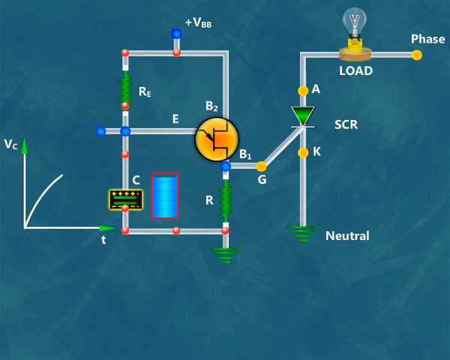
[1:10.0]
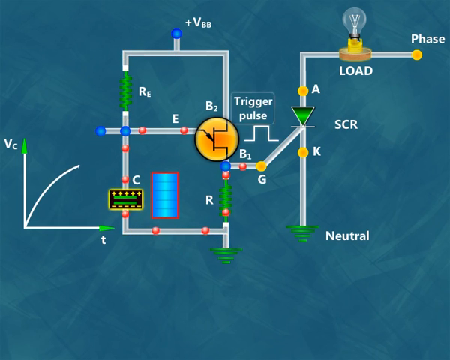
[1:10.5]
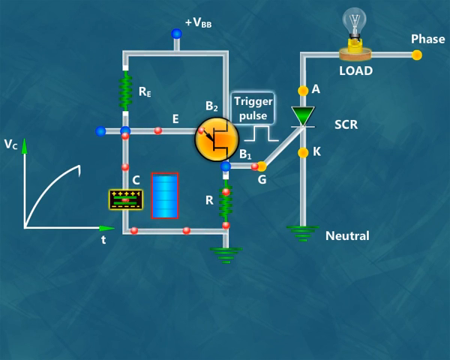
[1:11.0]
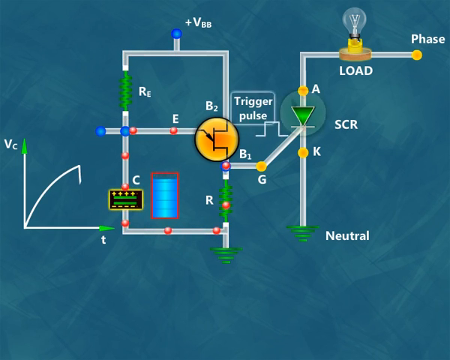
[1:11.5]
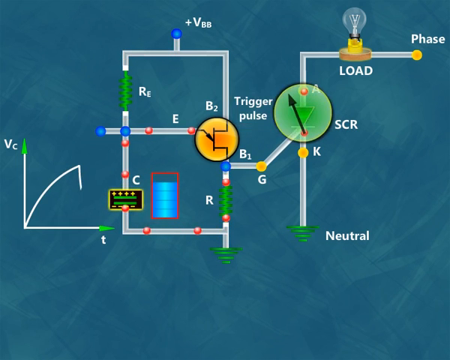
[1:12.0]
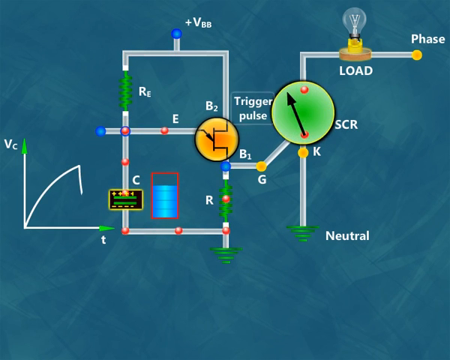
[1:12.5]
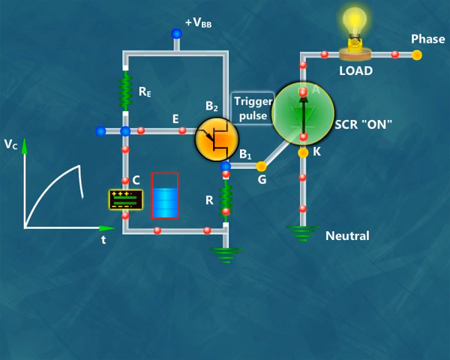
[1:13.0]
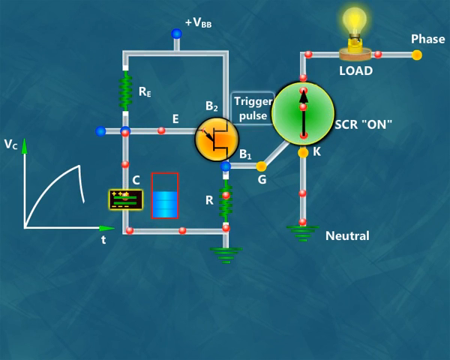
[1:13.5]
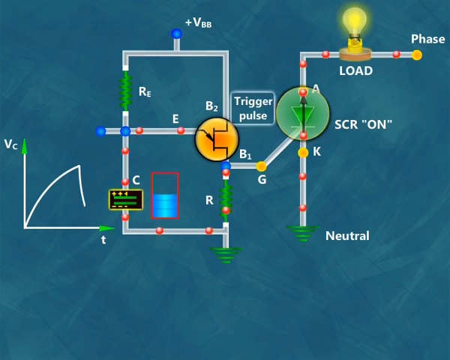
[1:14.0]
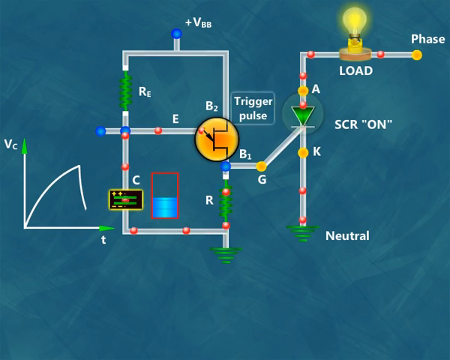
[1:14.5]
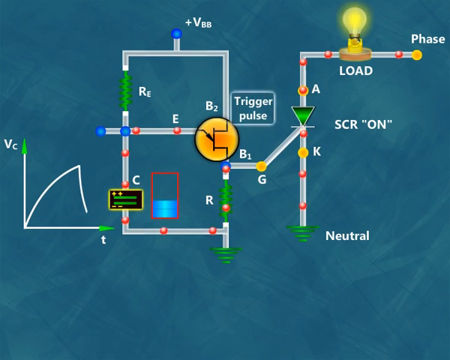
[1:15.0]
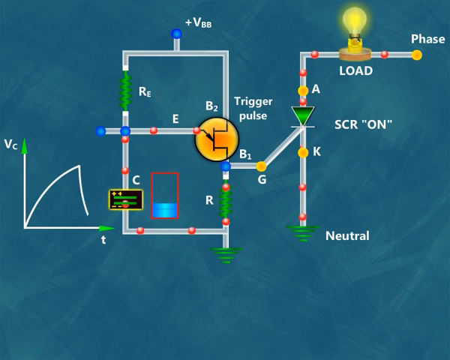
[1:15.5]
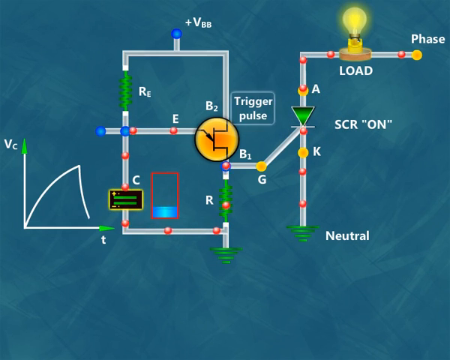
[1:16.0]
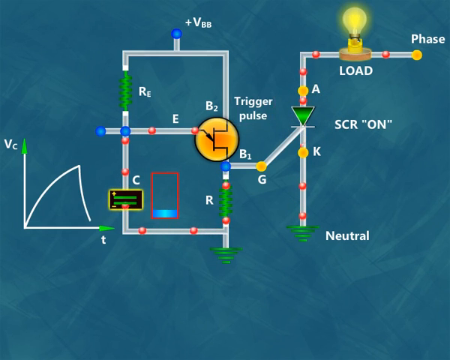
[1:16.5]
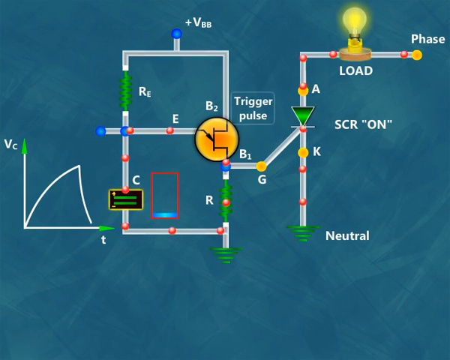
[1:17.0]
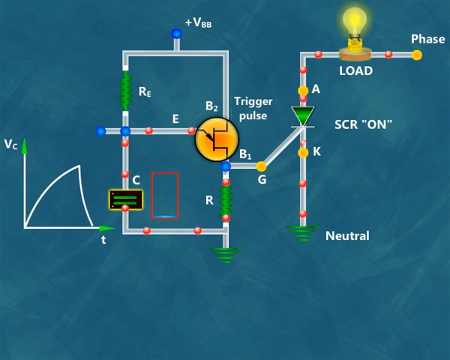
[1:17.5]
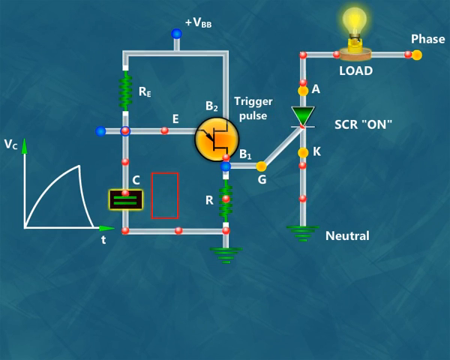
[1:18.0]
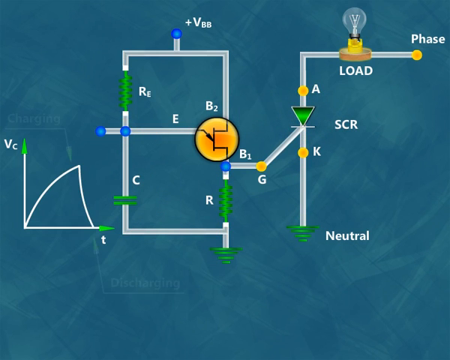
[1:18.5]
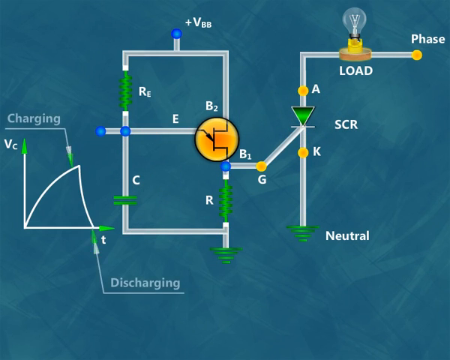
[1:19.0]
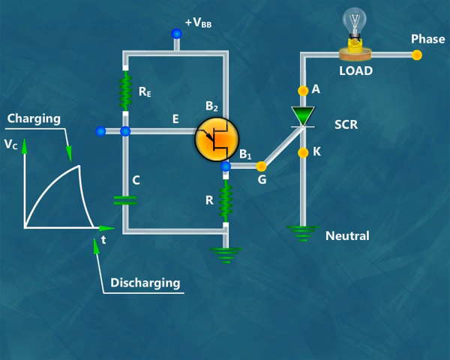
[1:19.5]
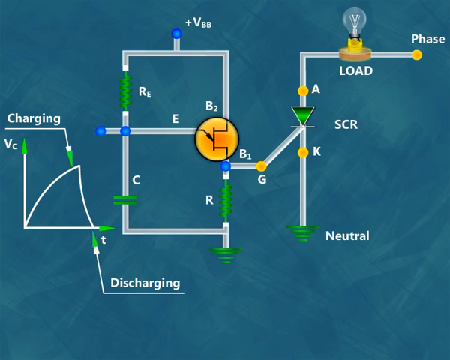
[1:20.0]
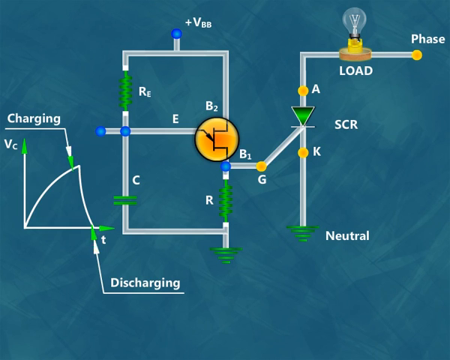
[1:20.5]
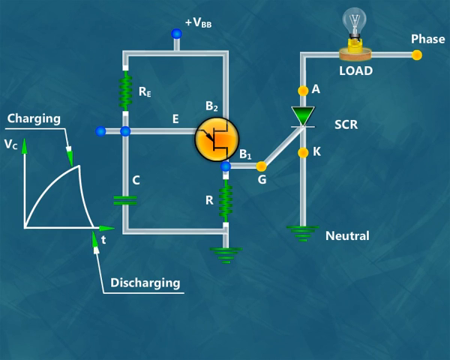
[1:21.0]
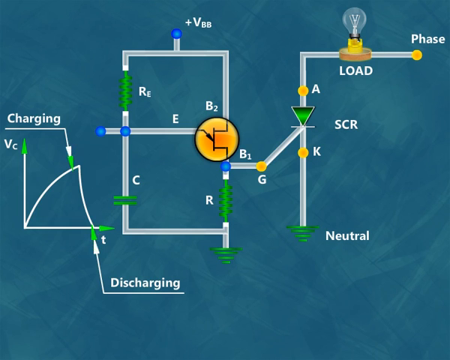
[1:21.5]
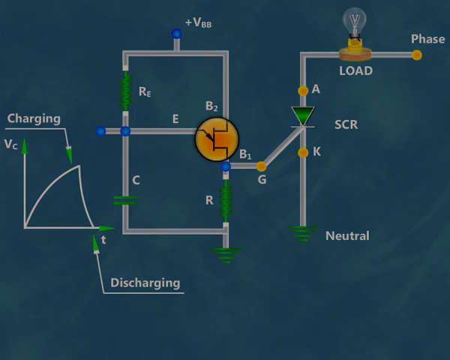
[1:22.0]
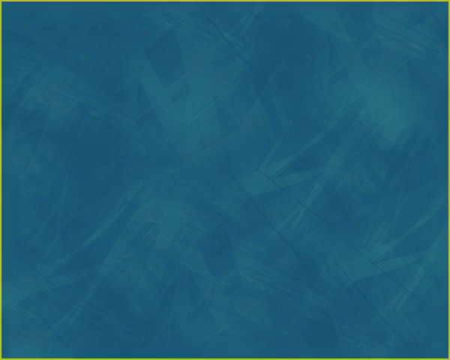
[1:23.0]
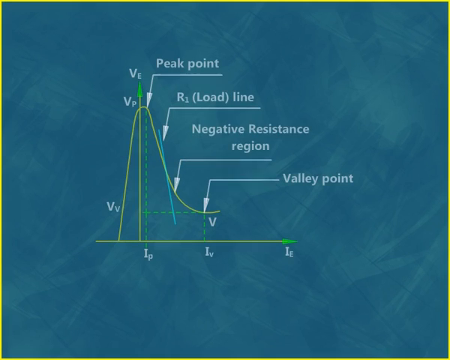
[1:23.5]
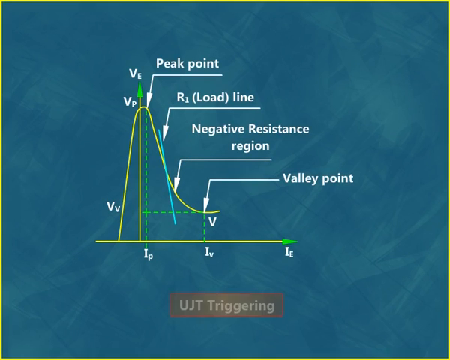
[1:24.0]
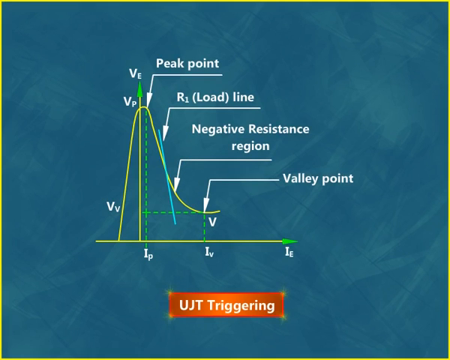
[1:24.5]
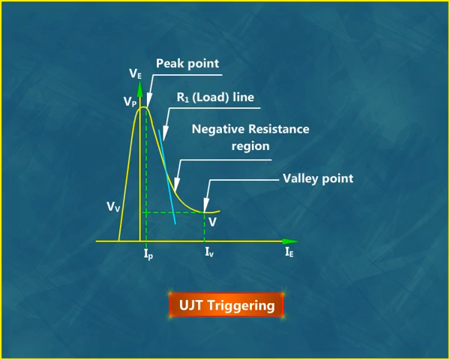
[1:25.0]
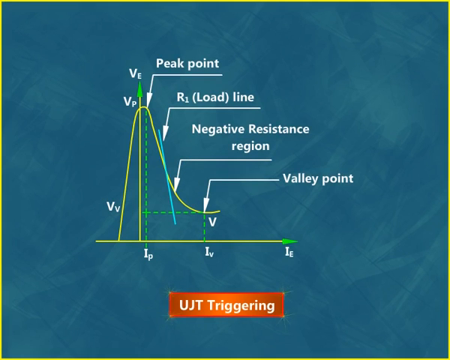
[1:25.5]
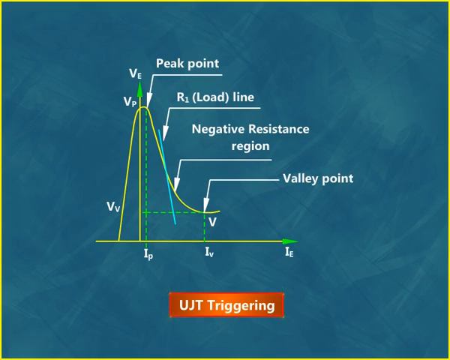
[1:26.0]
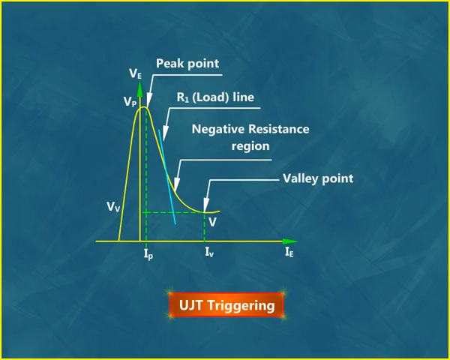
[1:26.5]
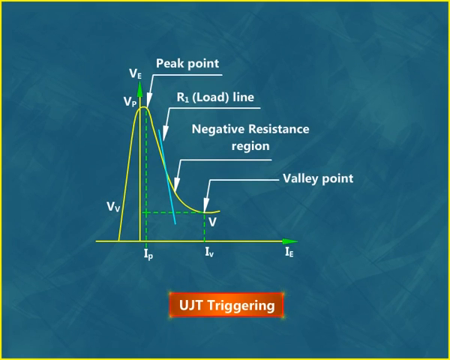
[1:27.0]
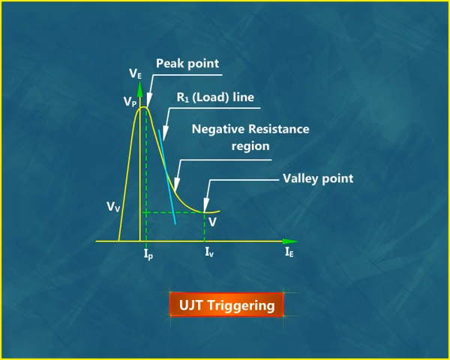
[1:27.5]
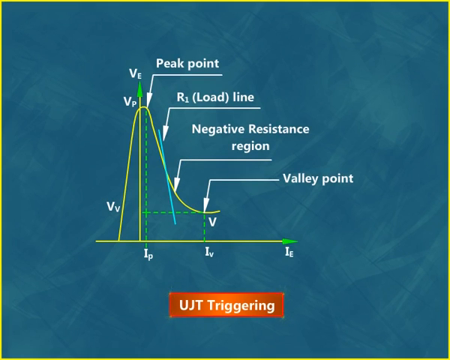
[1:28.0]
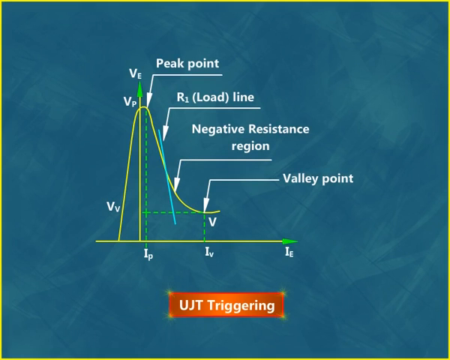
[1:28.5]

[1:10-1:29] There is a peak point, a load line, a negative resistance region, and a valley point. The capacitor and the resistors are part of the circuit.